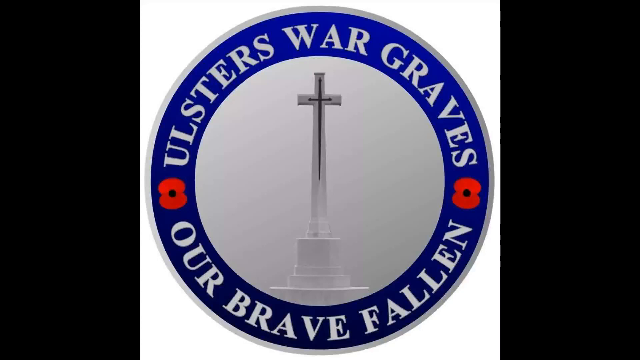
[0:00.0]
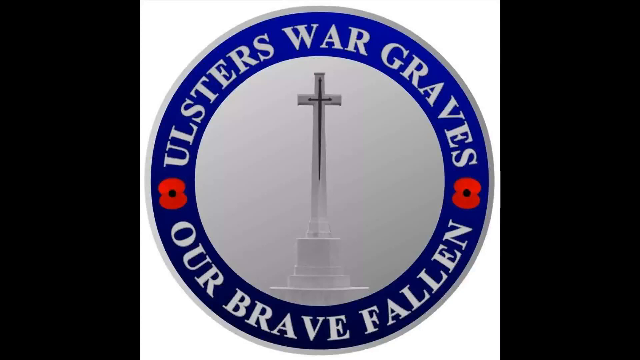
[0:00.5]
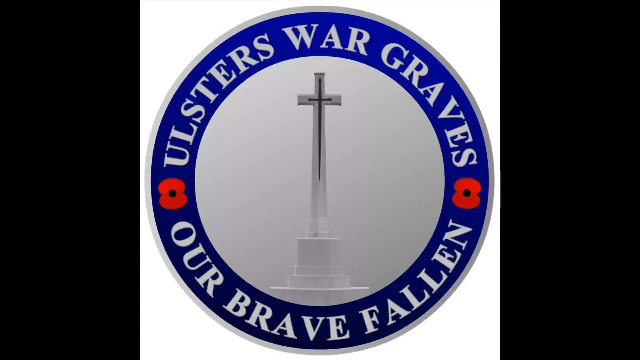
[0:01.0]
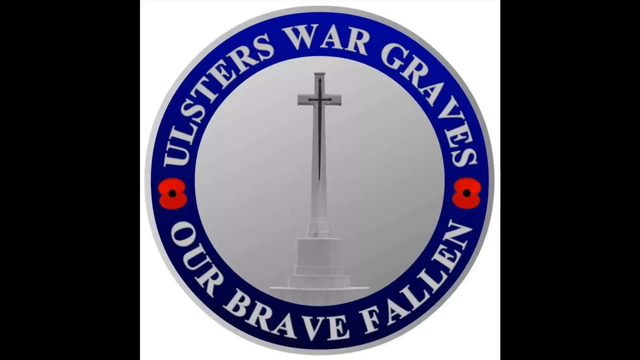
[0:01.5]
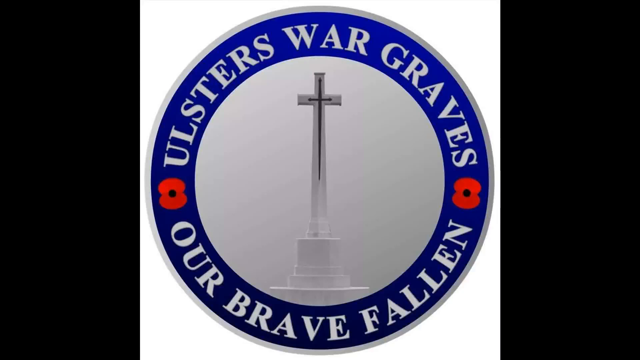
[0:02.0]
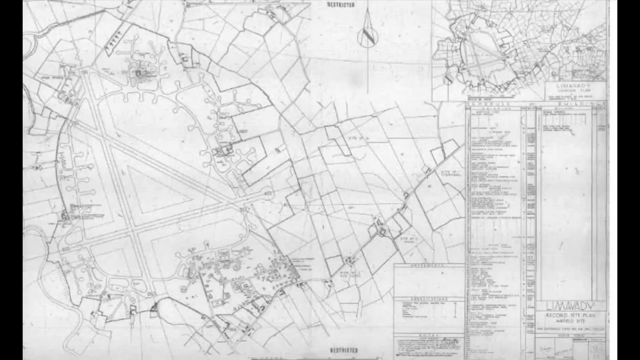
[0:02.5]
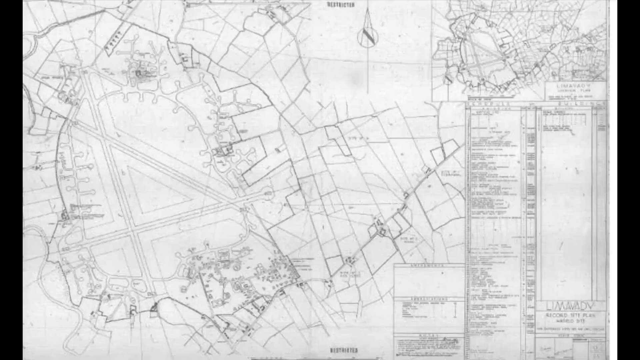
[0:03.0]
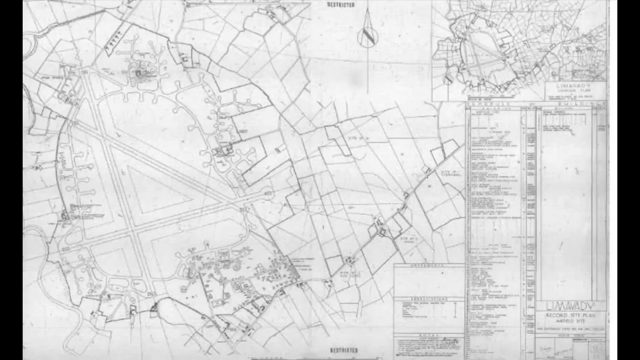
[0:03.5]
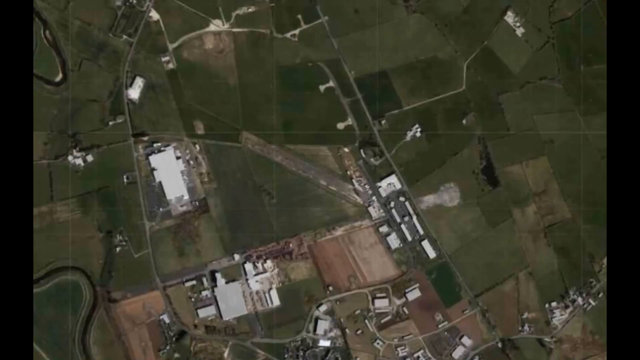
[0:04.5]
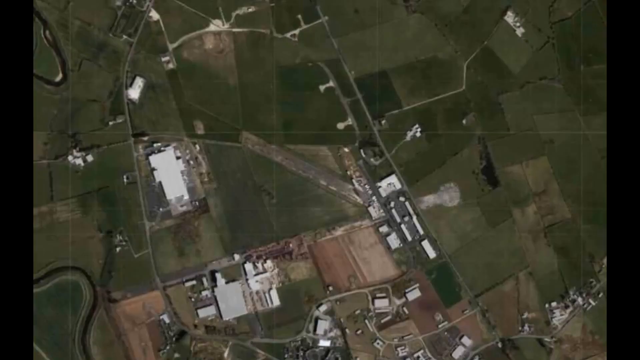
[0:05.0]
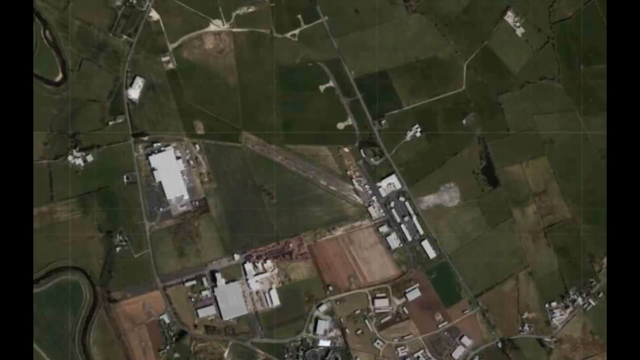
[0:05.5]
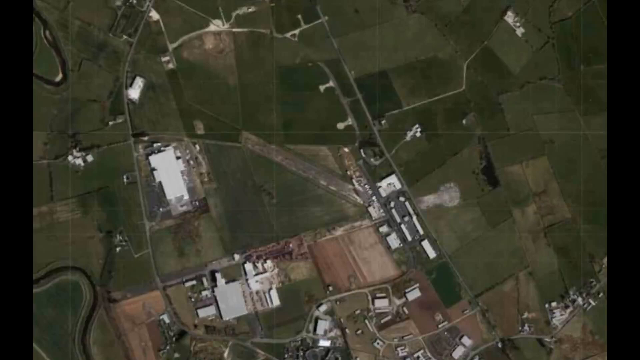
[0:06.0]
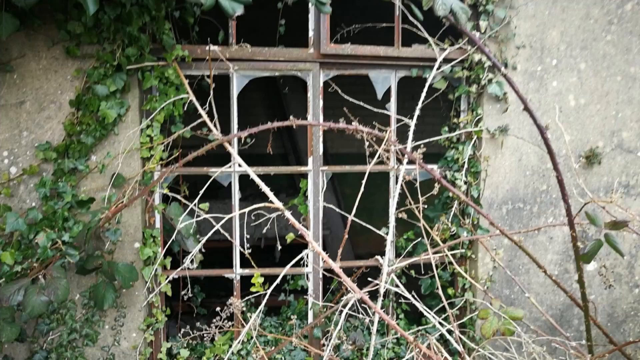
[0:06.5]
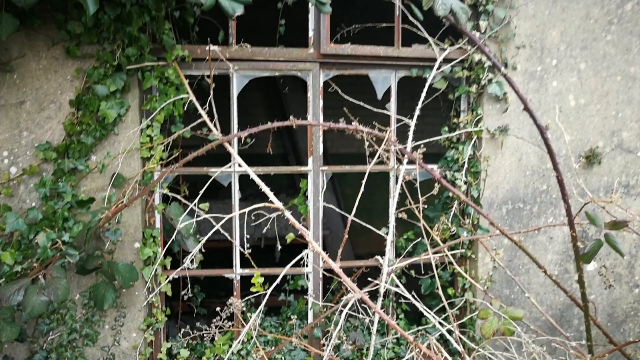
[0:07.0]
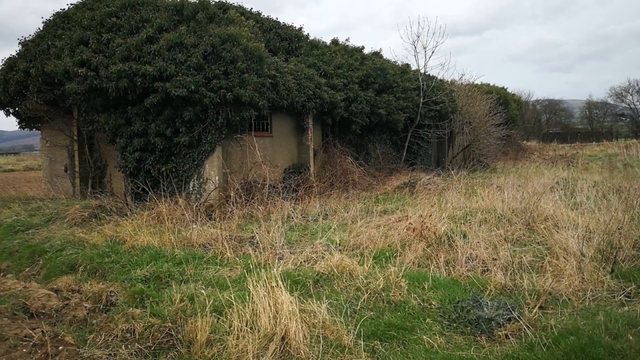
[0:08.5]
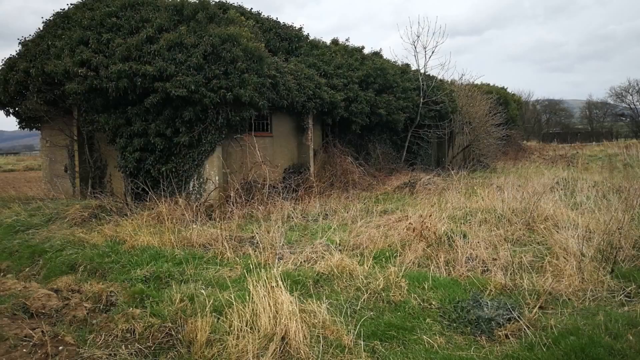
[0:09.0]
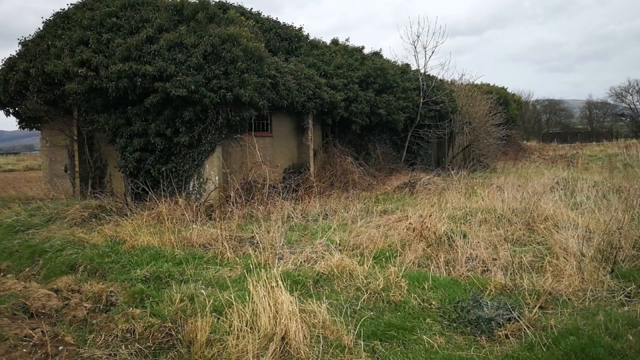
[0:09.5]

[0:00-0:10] The video opens with a logo: a gray circle containing a blue border and white text. In the center is a crucifix on a stone, which looks like a statue. There are also red symbols on both sides that resemble the number eight. The text reads "Ulster's war graves. Our brave fallen." The video transitions to a black-and-white map drawn out in detail of a specific area, then to another aerial view of that map, this time showing the earth as green, with roads and red earth; structures can be seen as well. Next comes a close-up of a cement building and its window, which has multiple panes; all the glass is shattered, with shards hanging from the frame. The frame appears to be rusted out, and a thorny thicket covers a portion of the window. A further-out view shows the structure almost covered in foliage, with greenery on its top and growth of vegetation almost completely covering it. There are a lot of weeds and green grass.